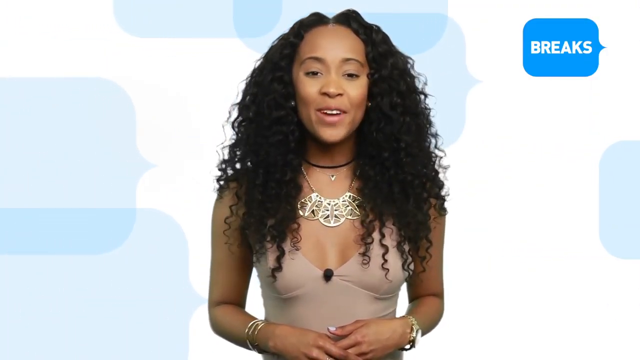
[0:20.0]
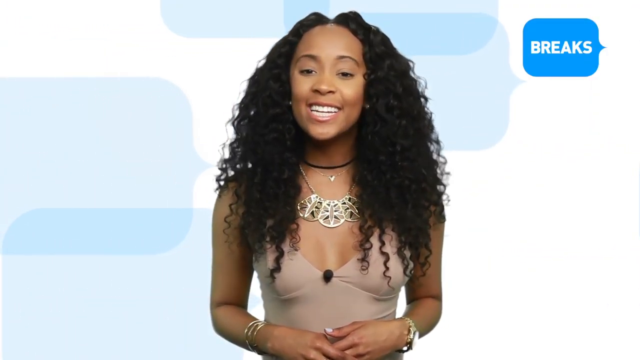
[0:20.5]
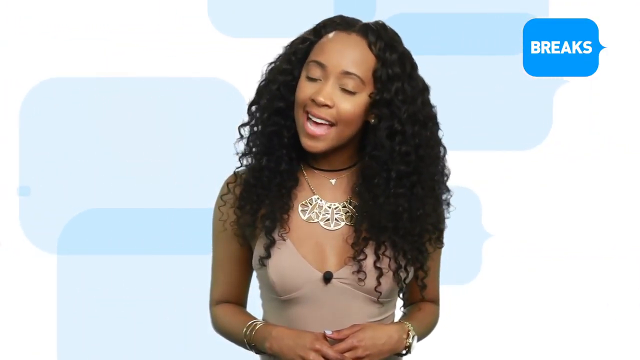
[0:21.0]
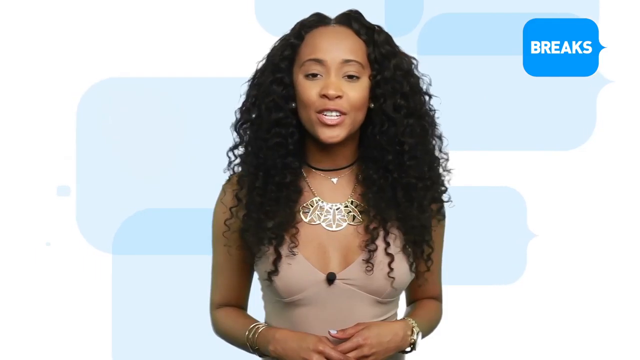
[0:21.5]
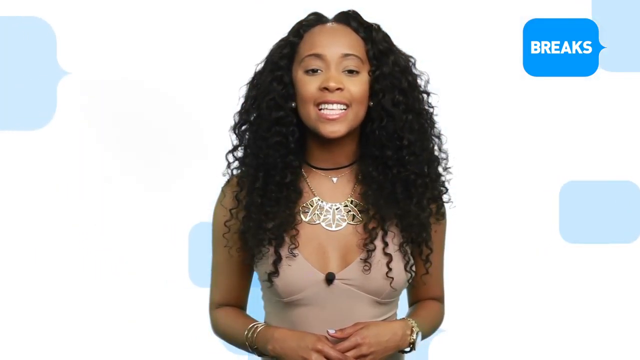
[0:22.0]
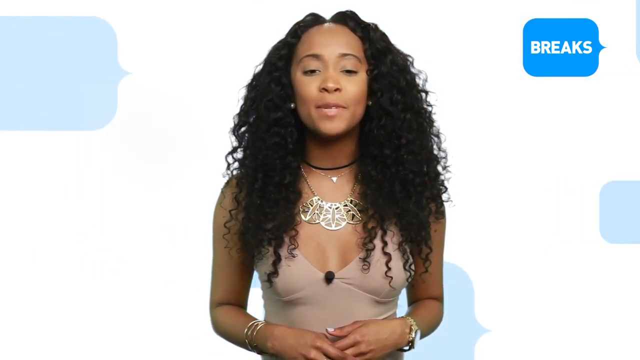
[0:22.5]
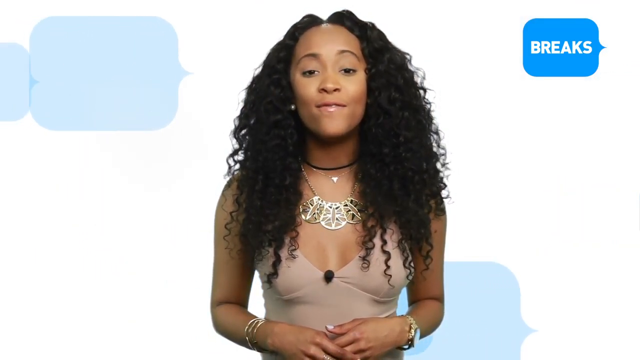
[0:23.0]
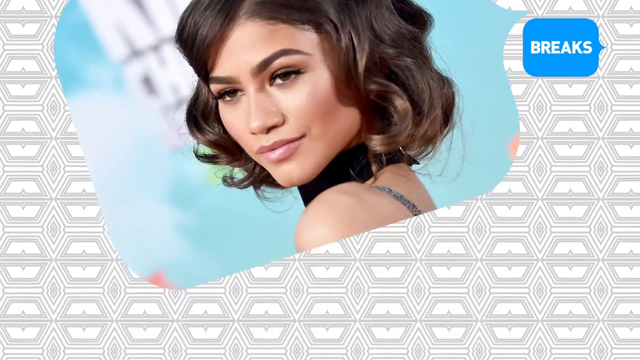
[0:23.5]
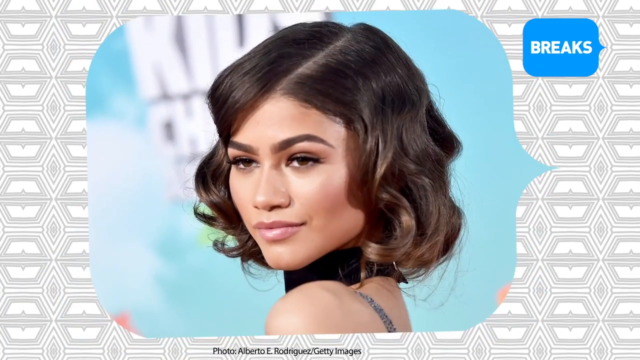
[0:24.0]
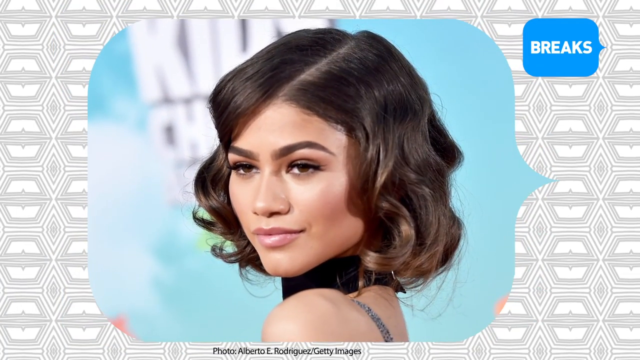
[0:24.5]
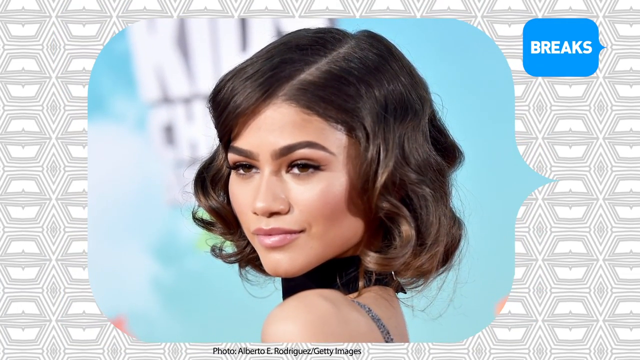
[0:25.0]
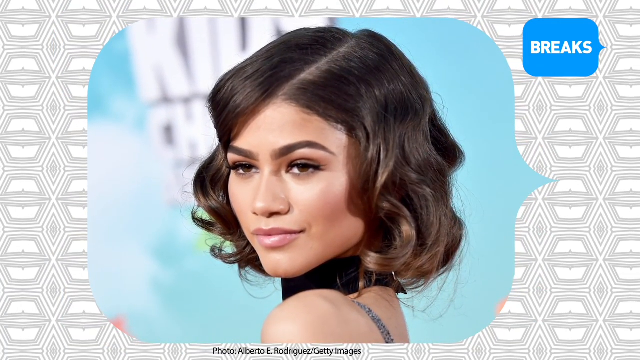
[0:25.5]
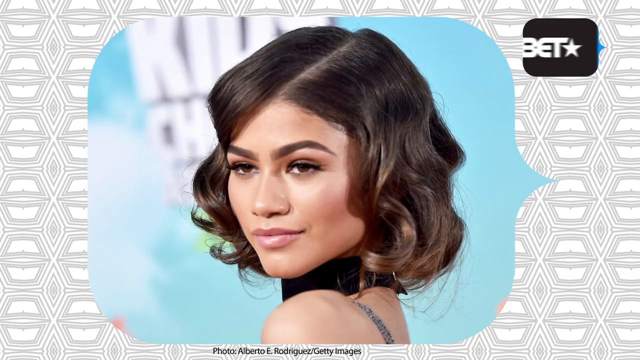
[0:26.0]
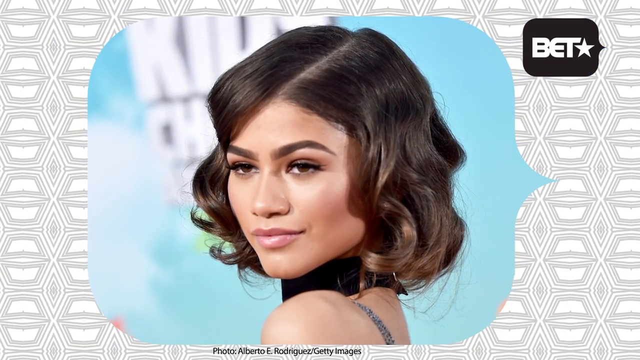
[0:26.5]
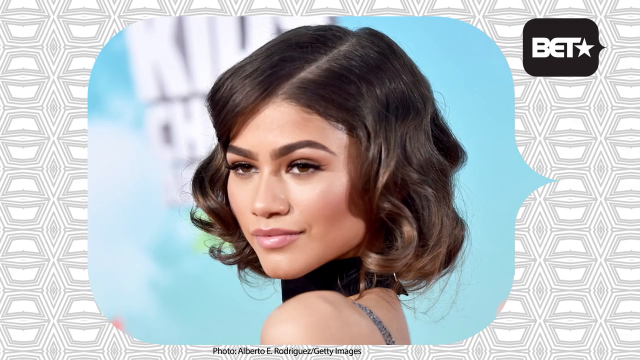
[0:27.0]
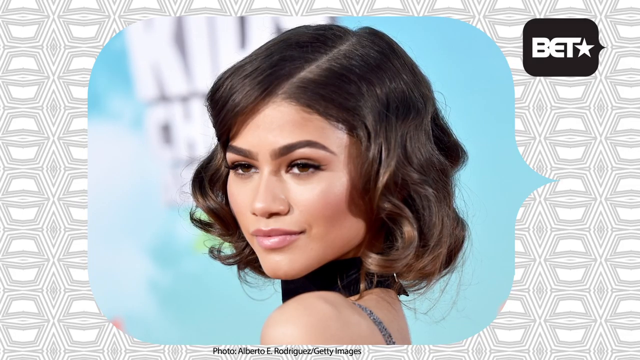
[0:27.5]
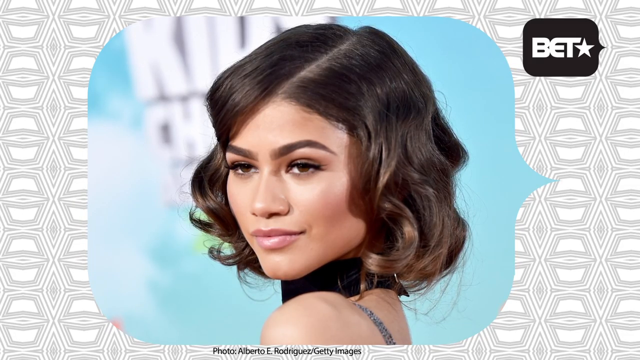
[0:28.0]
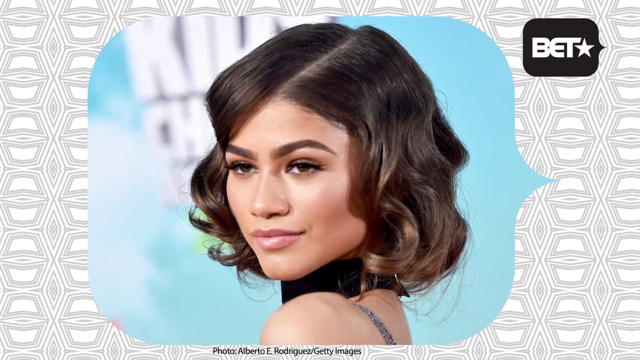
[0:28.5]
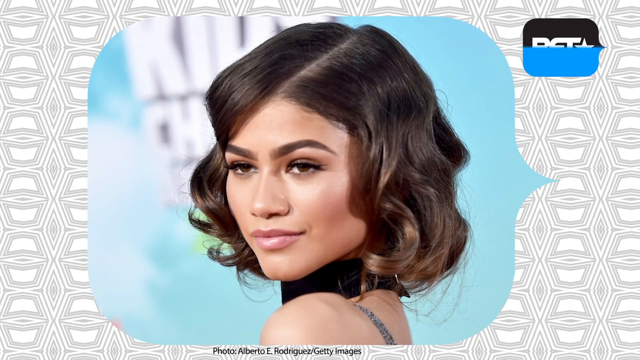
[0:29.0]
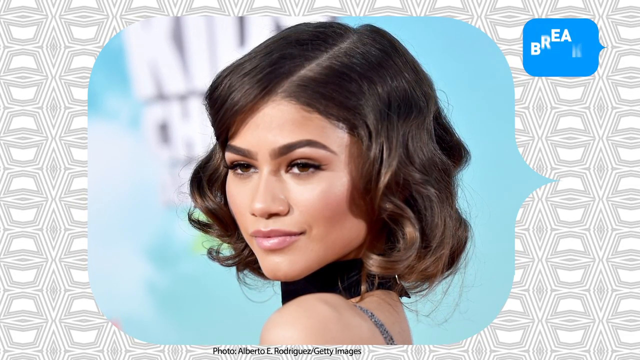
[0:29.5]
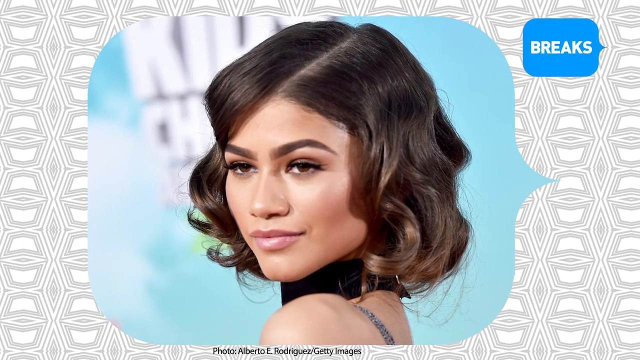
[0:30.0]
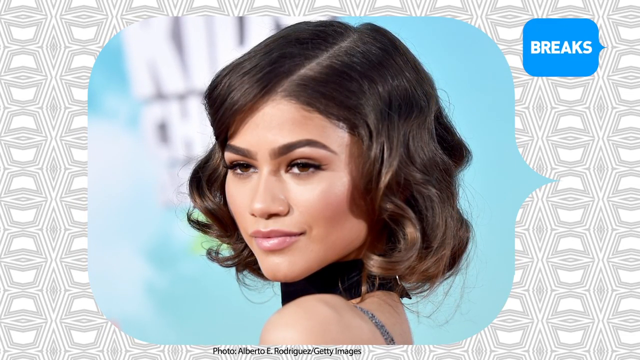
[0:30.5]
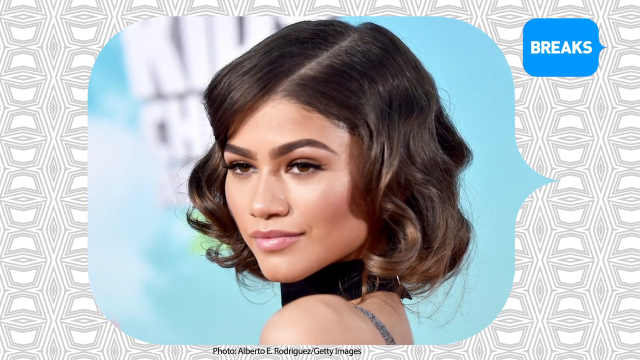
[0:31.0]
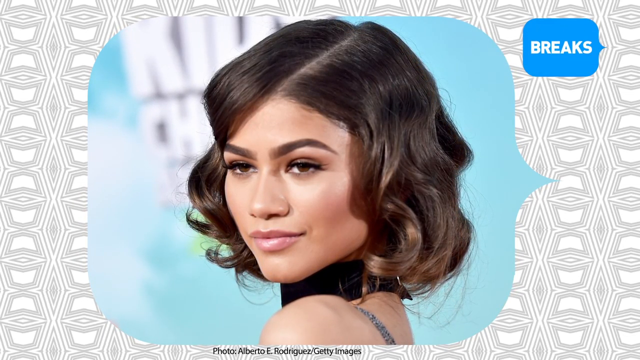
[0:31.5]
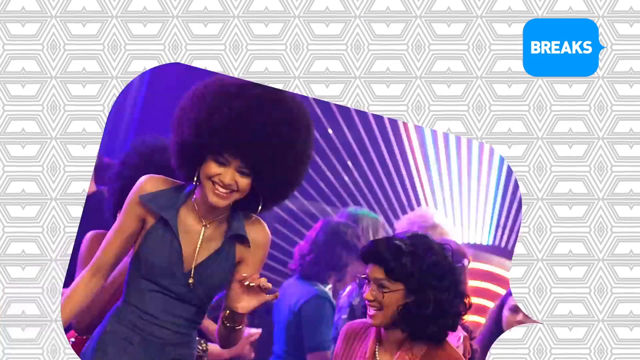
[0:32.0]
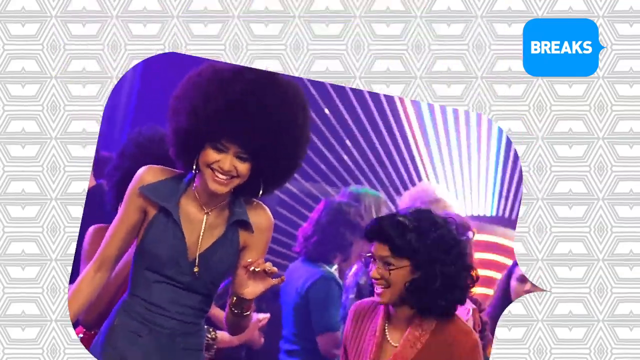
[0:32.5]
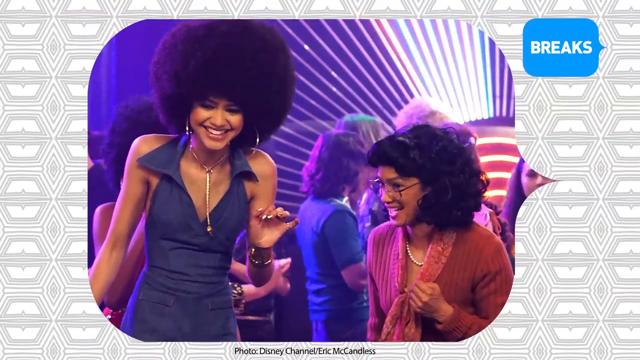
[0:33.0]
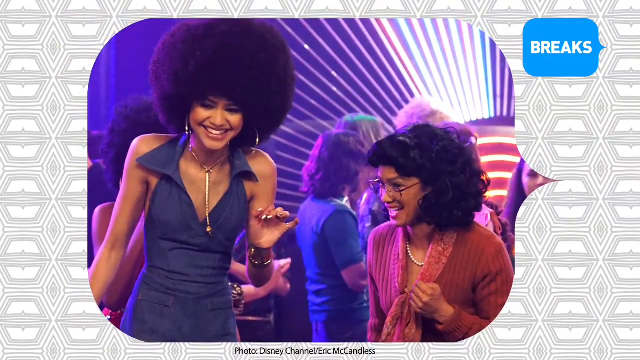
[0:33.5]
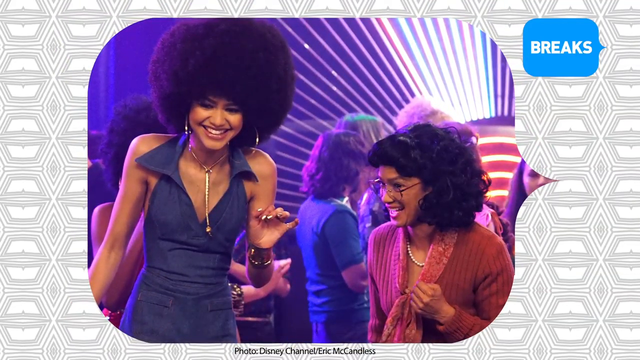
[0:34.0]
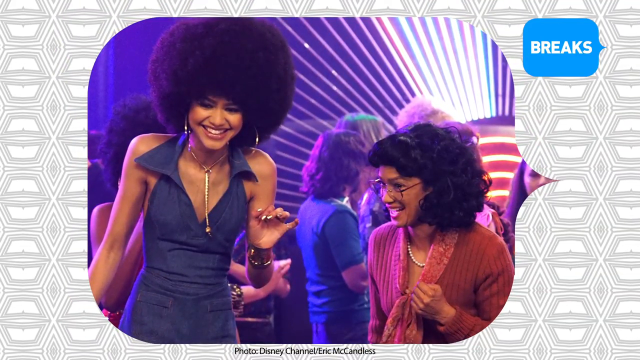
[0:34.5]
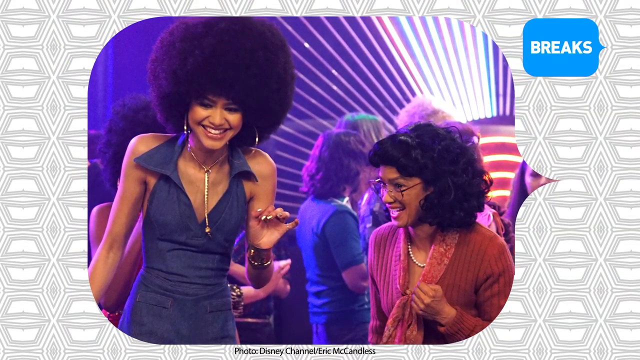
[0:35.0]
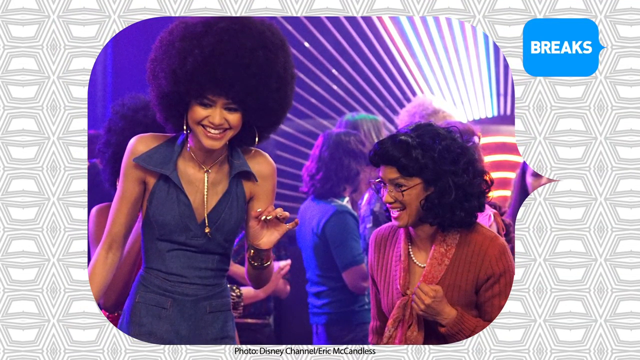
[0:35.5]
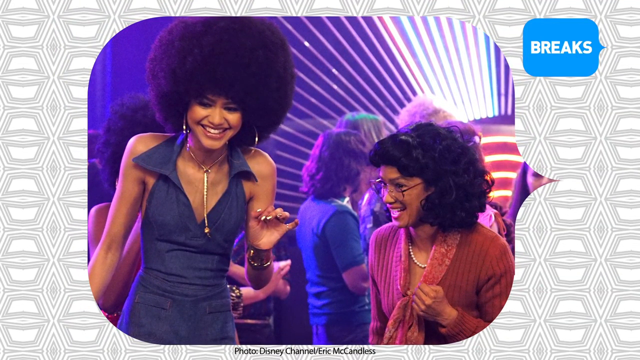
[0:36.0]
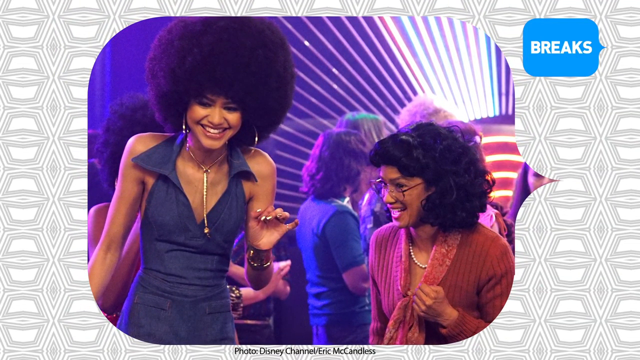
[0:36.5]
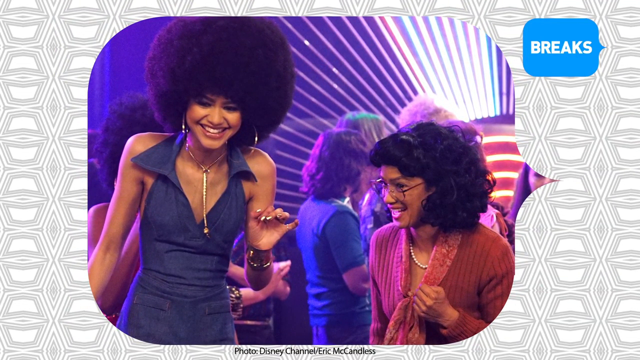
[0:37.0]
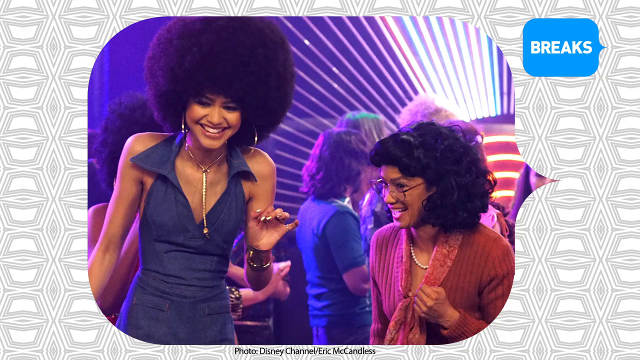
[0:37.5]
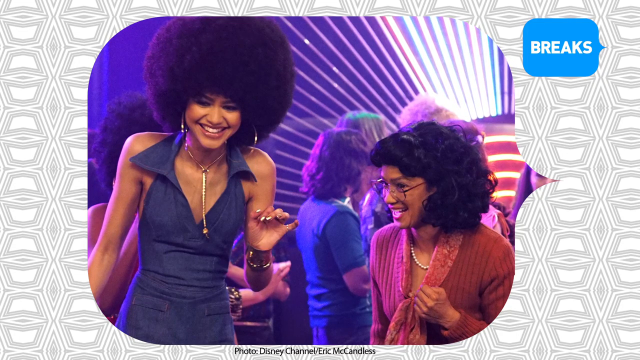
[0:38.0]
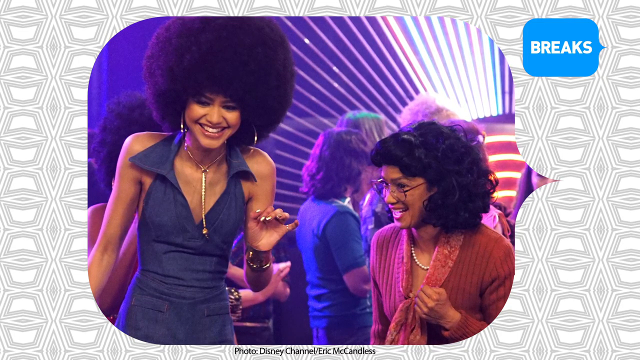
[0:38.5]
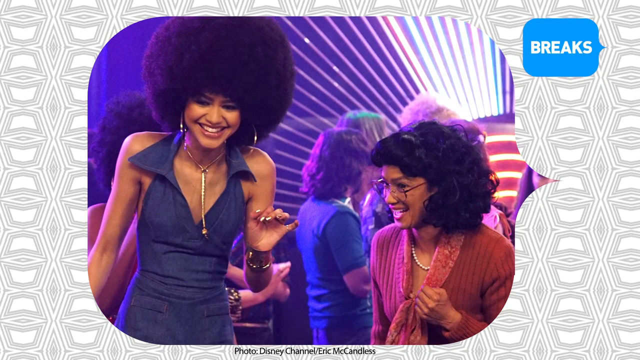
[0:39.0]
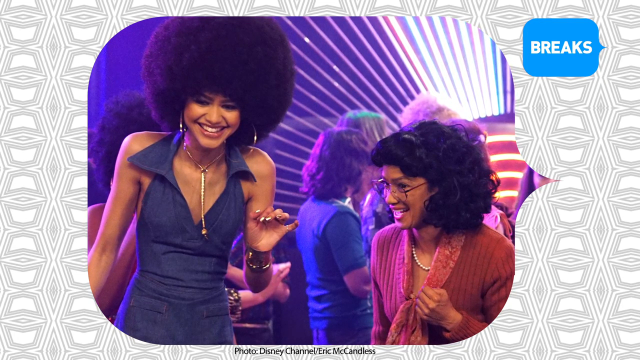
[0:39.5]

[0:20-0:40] The woman talks to the camera, tilts her head to the right and then back to the centre. She then disappears from the screen and a background of hexagons split in half appears, with white behind the hexagons. A photograph appears in a speech bubble: a woman with dark hair and brown eyes, wearing a black choker and staring over her left shoulder. The speech bubble then changes, and another one appears from the bottom left of the screen and flips upwards. It holds a photograph of two women who seem to be the main characters. The one on the left has a giant afro and wears a blue sleeveless dress, a necklace with a long chain coming from its middle that dangles between her breasts, and big hoop earrings. To her right is a woman with curly hair and bangs, wearing glasses, a pink cardigan and a pearl necklace. They are laughing and looking down and to the left. Behind them are people, and on the back wall there are long lines of different colours on a purple background.